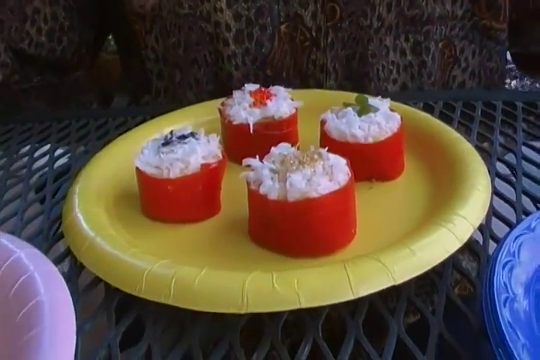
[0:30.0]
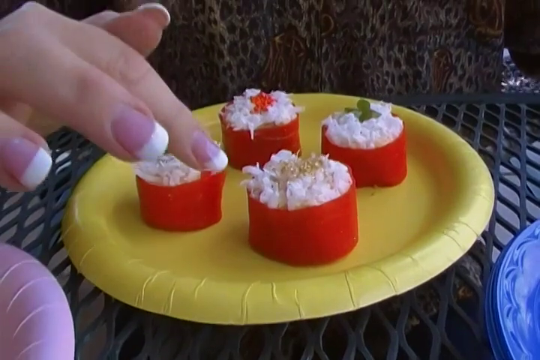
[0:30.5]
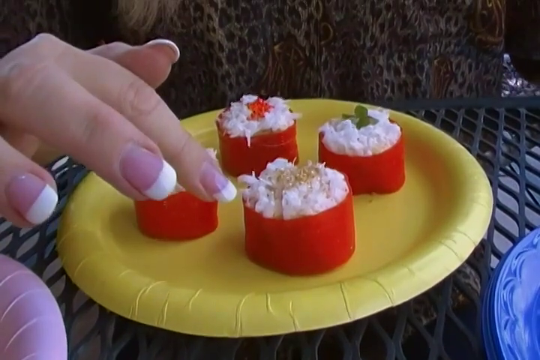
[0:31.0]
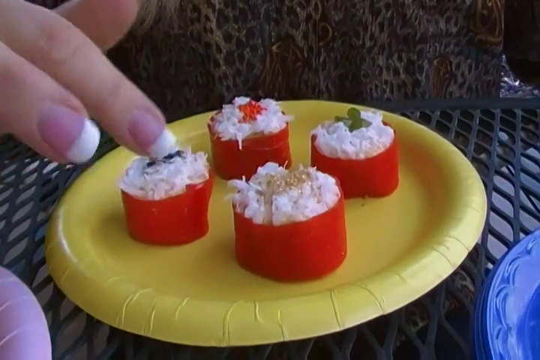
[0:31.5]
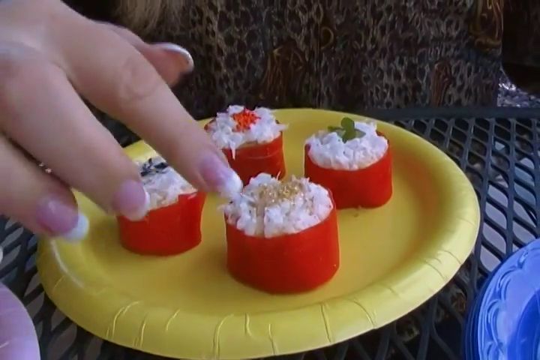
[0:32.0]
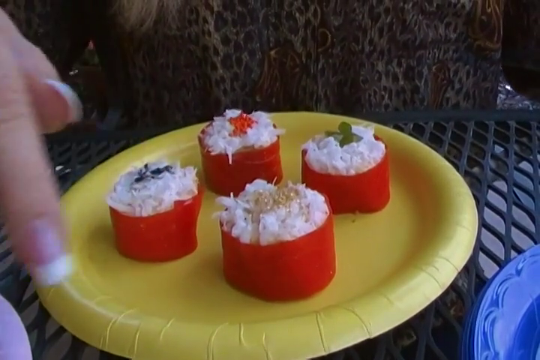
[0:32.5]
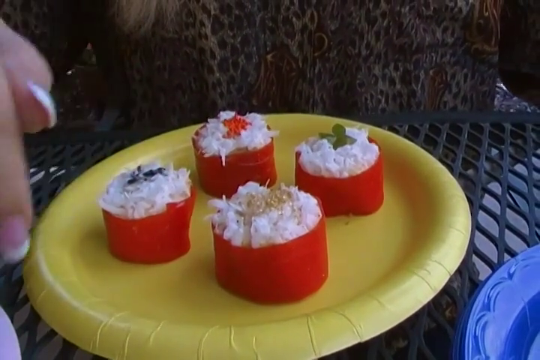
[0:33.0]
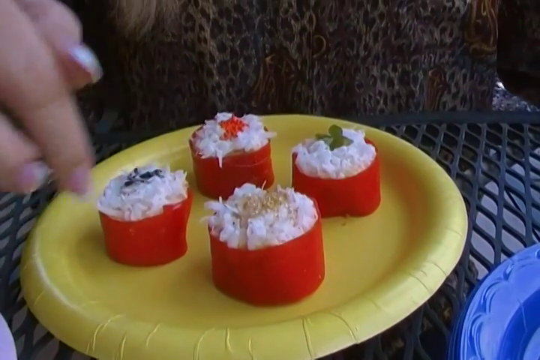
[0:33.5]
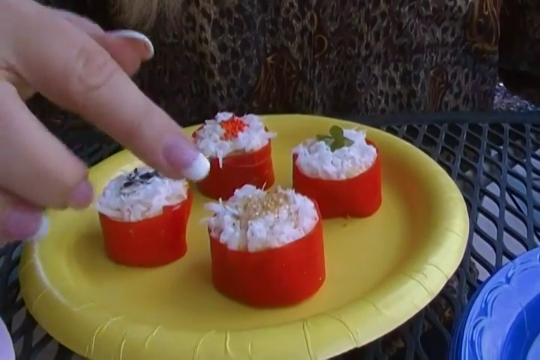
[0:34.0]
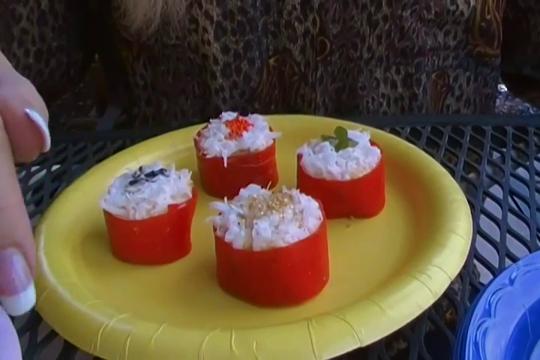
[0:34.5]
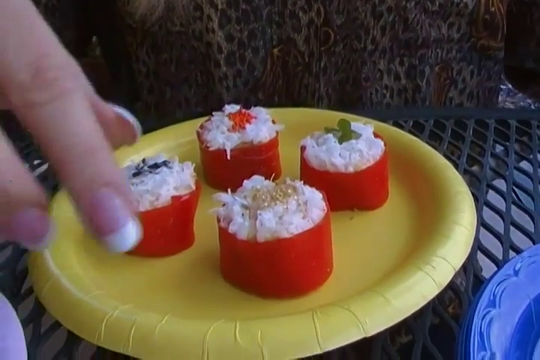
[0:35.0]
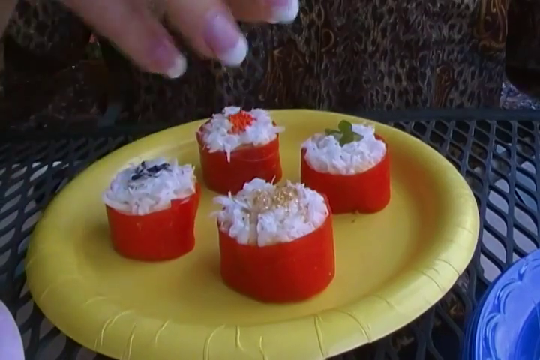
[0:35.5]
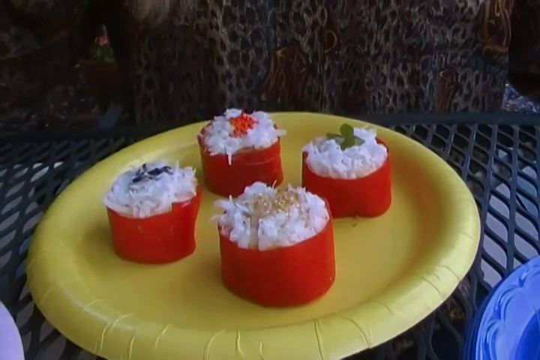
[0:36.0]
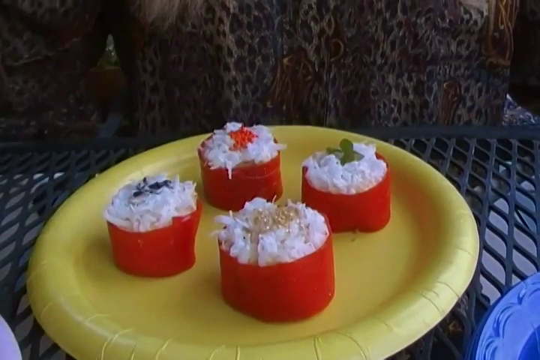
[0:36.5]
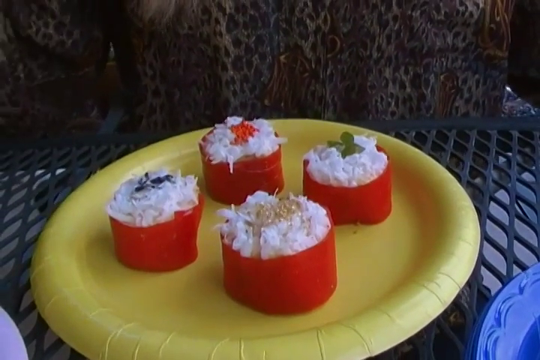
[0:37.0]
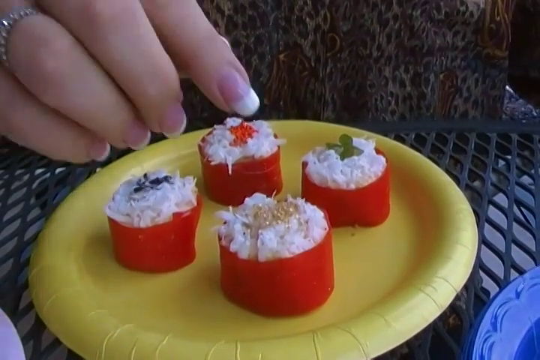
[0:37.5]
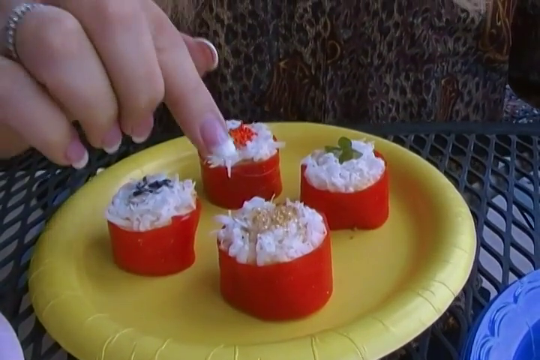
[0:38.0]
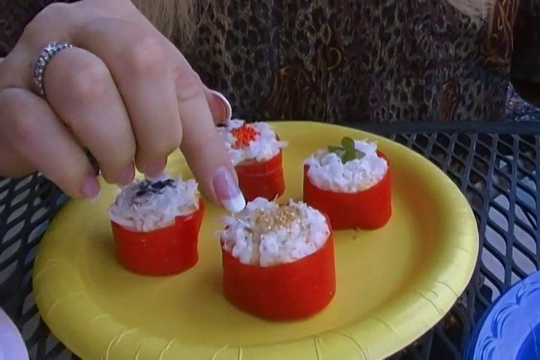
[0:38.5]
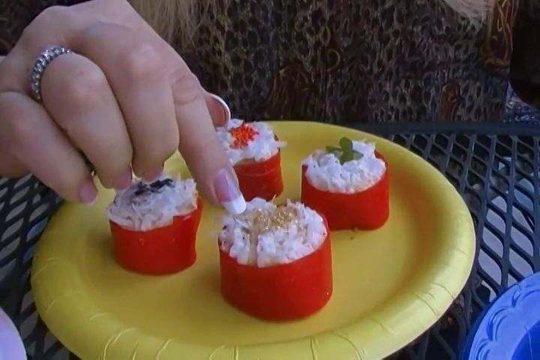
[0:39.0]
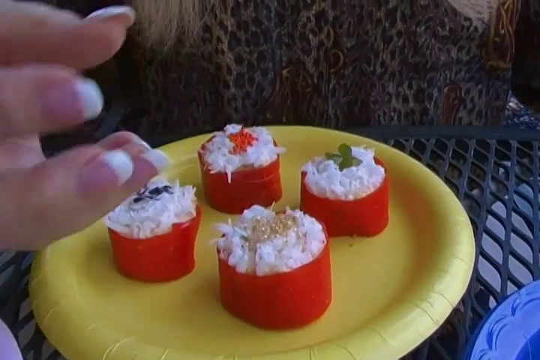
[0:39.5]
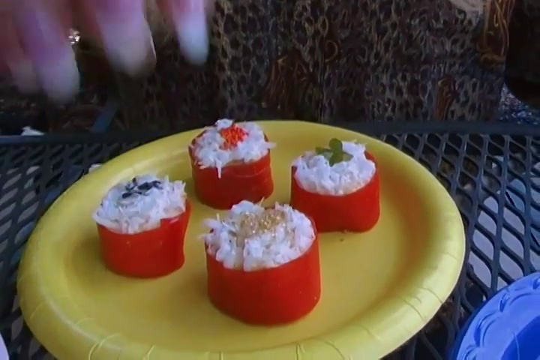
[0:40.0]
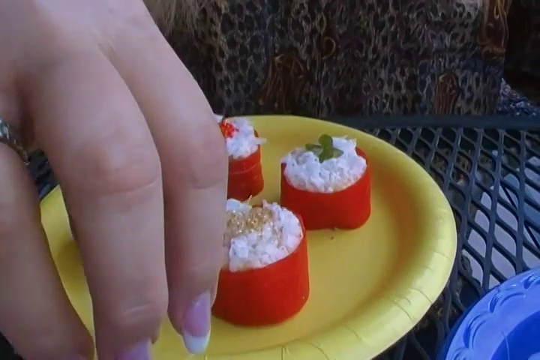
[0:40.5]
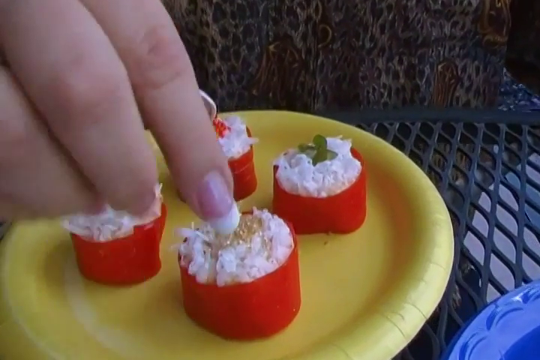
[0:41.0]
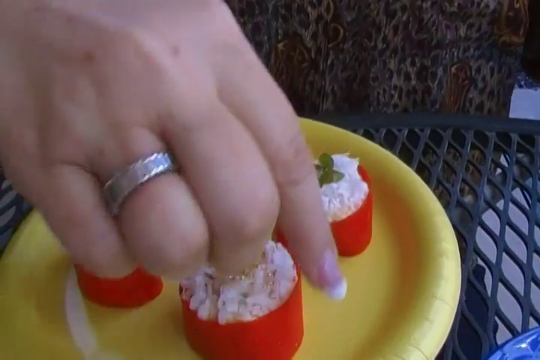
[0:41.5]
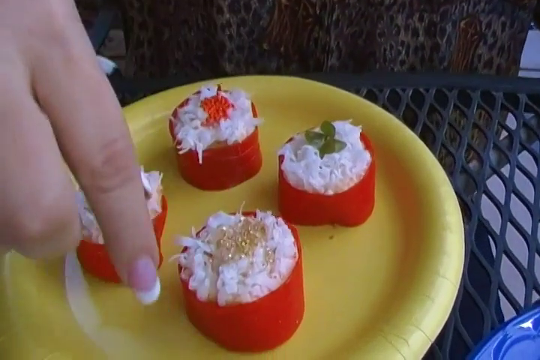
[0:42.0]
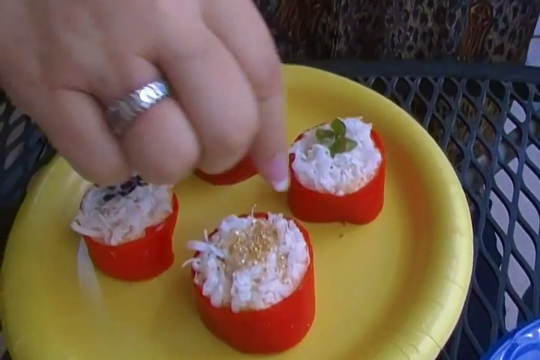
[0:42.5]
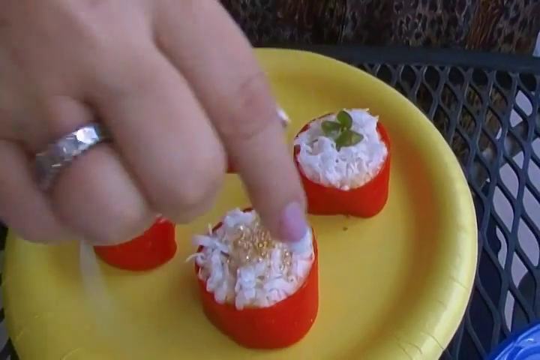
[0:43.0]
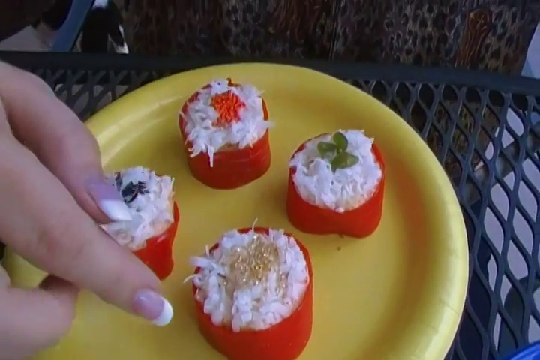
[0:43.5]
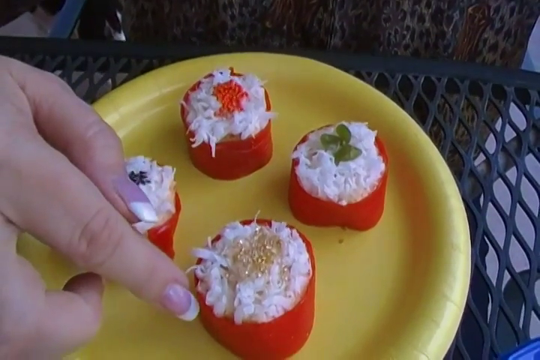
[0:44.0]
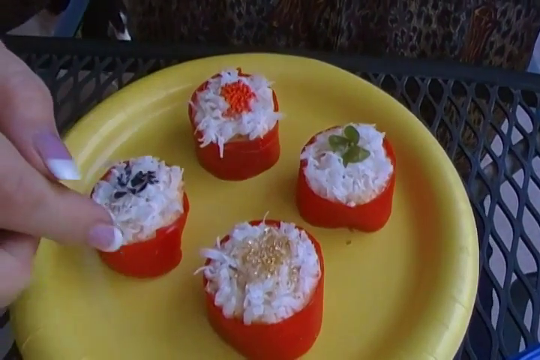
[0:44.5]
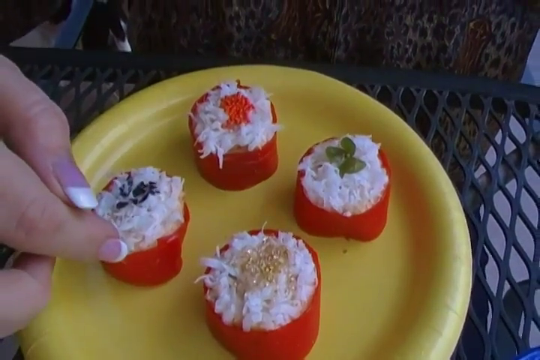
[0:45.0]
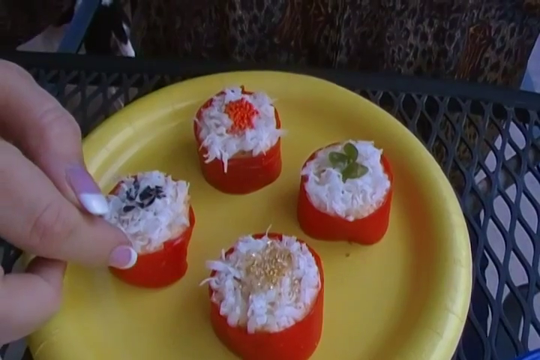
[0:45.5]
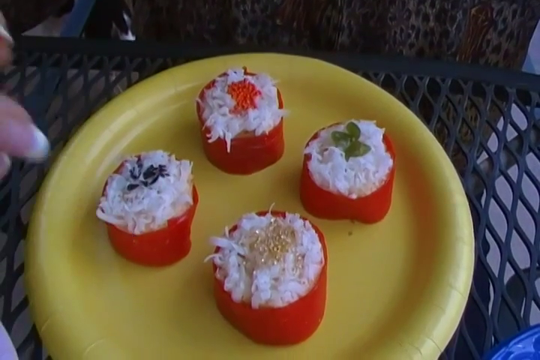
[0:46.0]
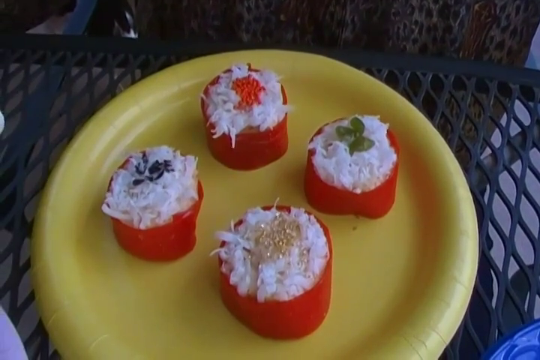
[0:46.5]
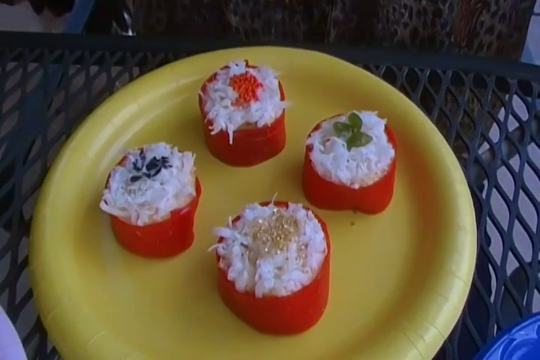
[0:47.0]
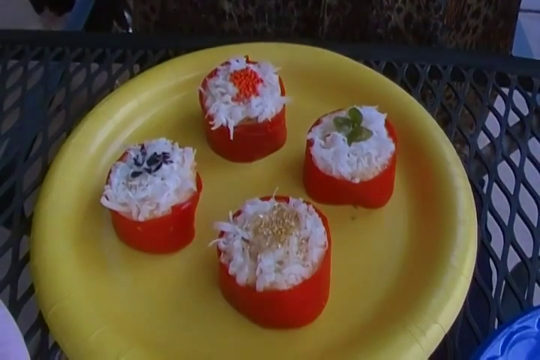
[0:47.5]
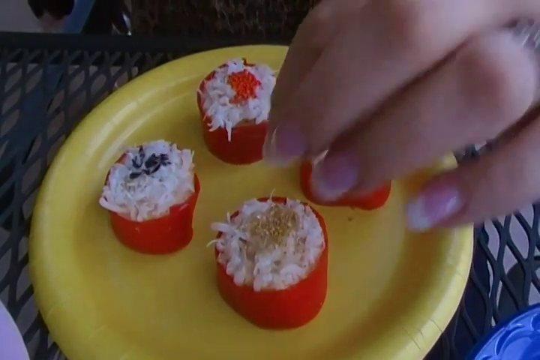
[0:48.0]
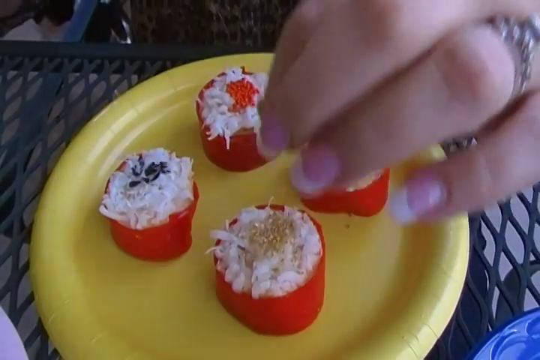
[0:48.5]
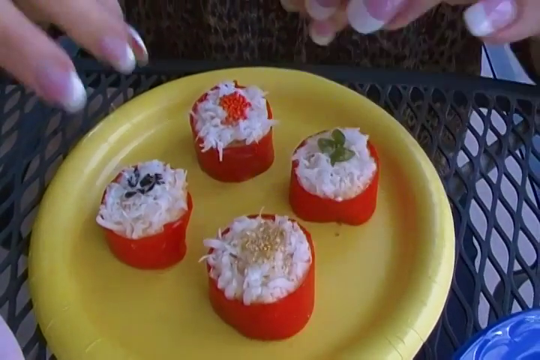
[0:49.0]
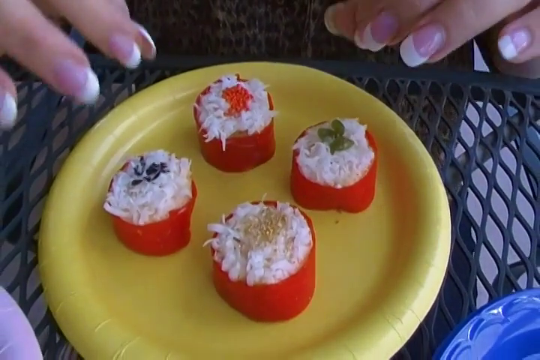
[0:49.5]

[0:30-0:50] The same four little cup-like items are visible, each with a different topping: one has a green topping, another an orange topping, and the one facing her has something like eggs on top, apparently different flavors. She continues talking while the items are shown in close-up, pointing to them and gesturing with her hands as she indicates what they are and what is in them. The table is an outdoor see-through table, with other plates of food around it.